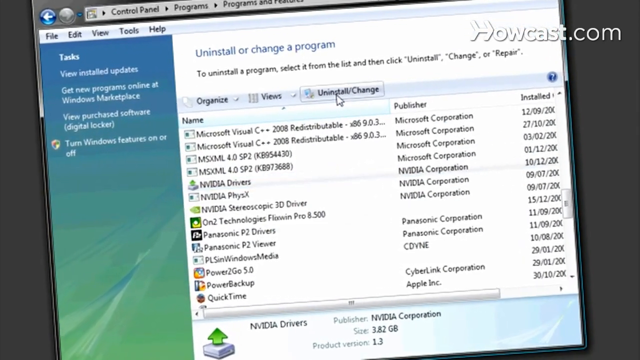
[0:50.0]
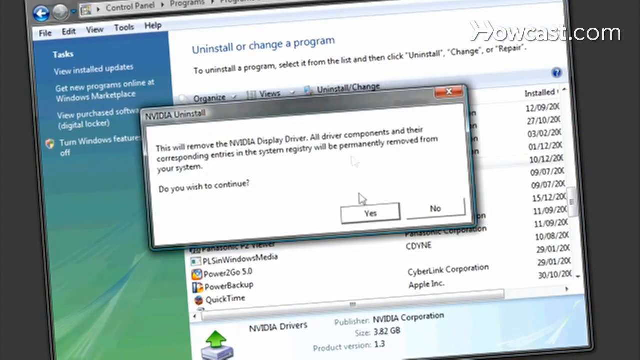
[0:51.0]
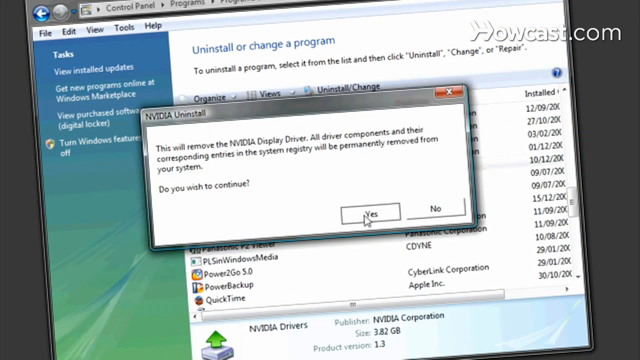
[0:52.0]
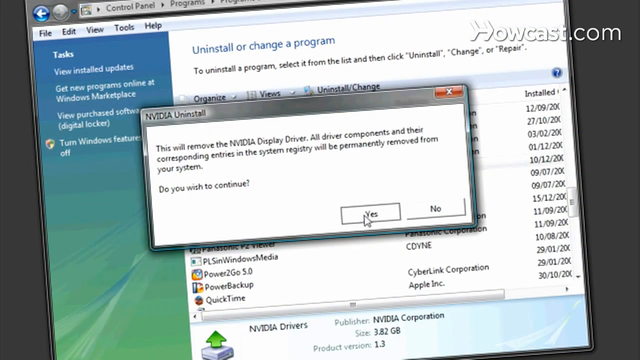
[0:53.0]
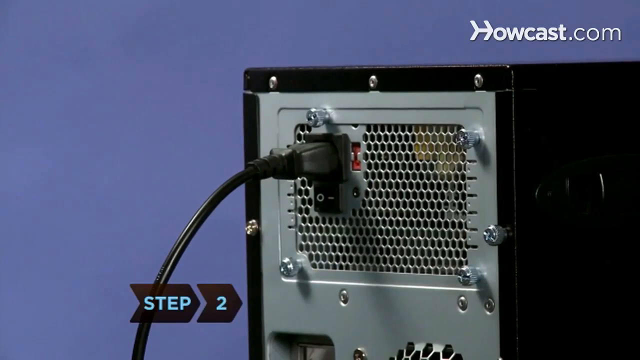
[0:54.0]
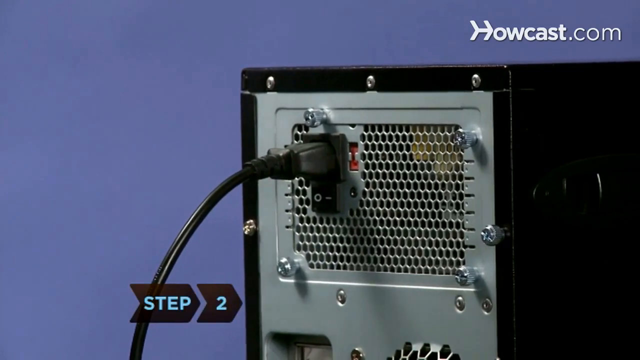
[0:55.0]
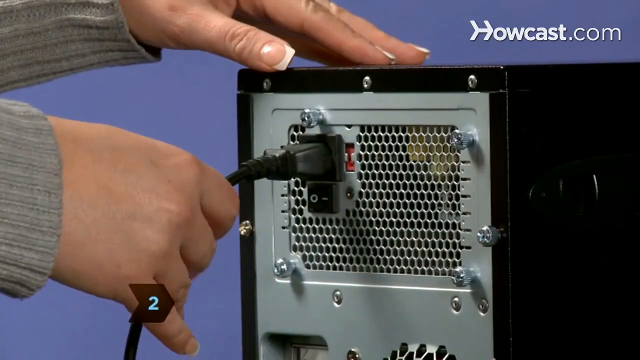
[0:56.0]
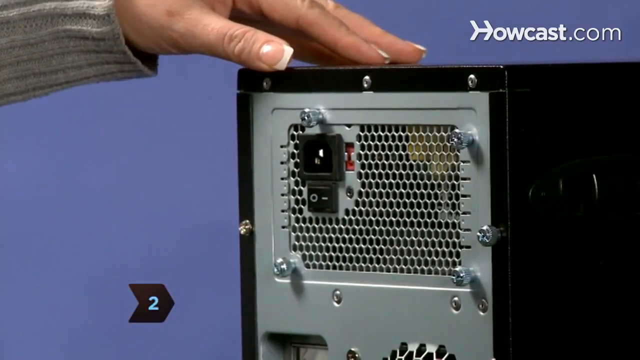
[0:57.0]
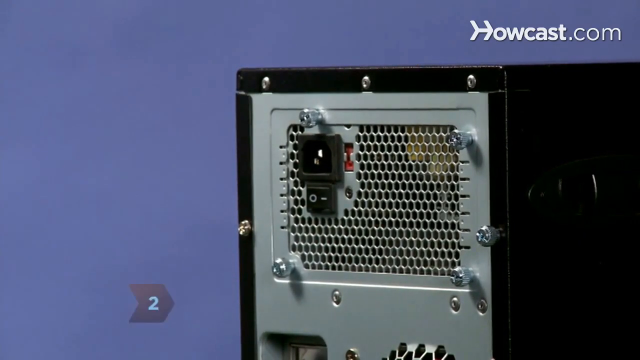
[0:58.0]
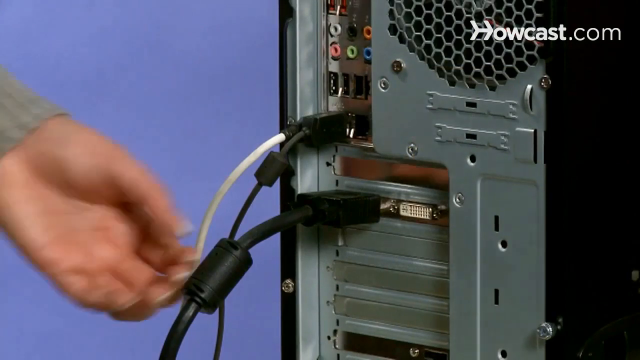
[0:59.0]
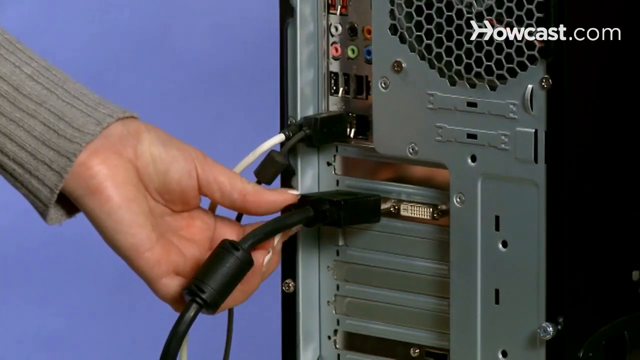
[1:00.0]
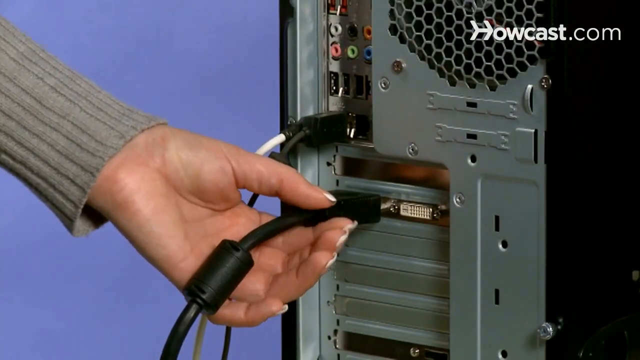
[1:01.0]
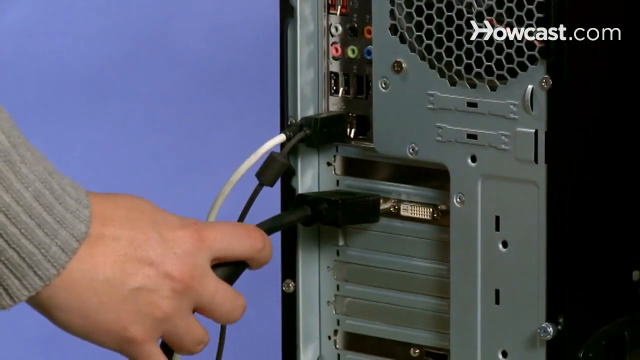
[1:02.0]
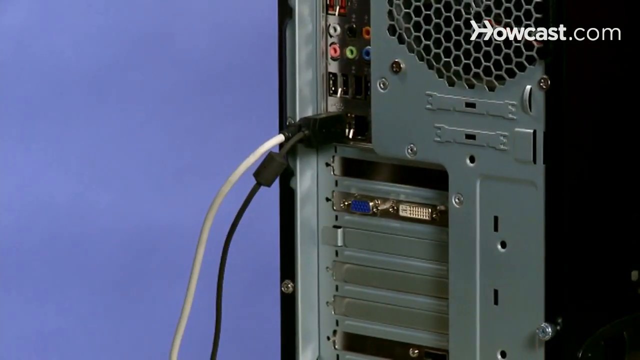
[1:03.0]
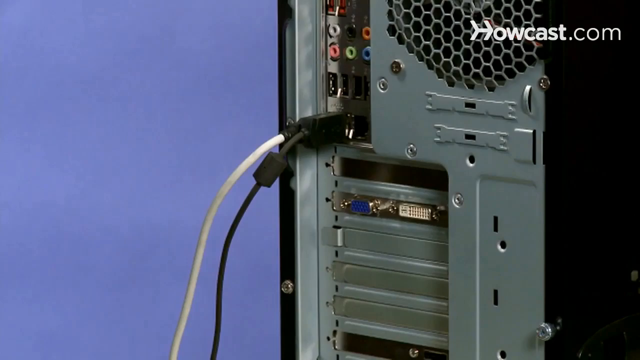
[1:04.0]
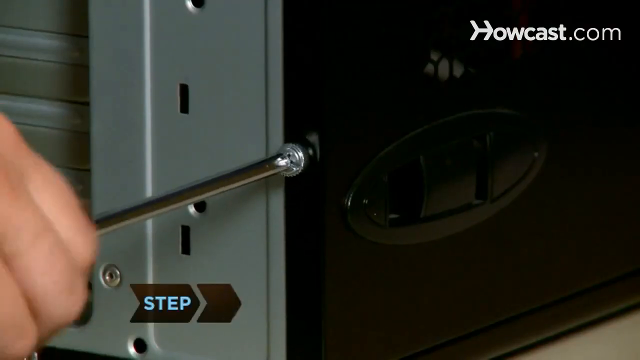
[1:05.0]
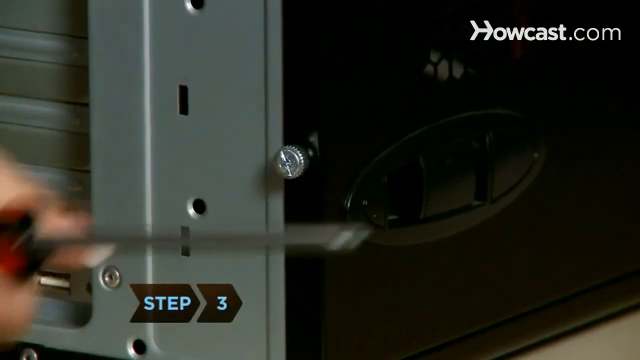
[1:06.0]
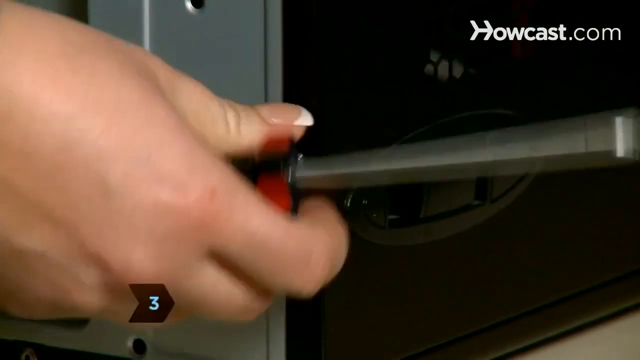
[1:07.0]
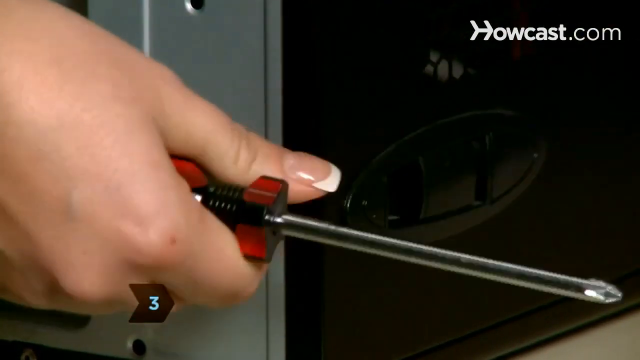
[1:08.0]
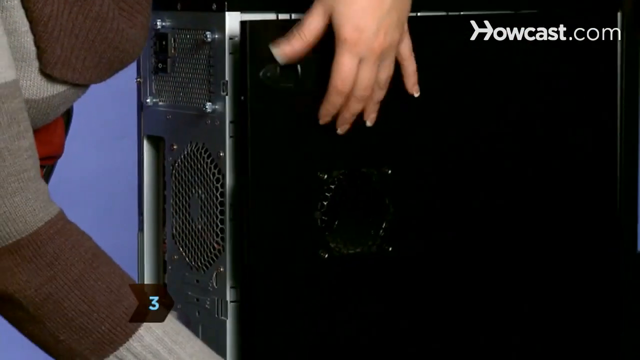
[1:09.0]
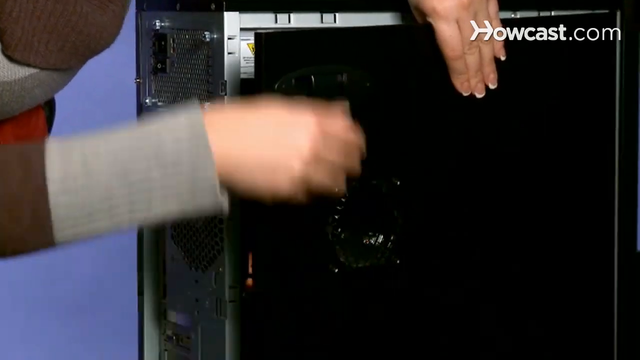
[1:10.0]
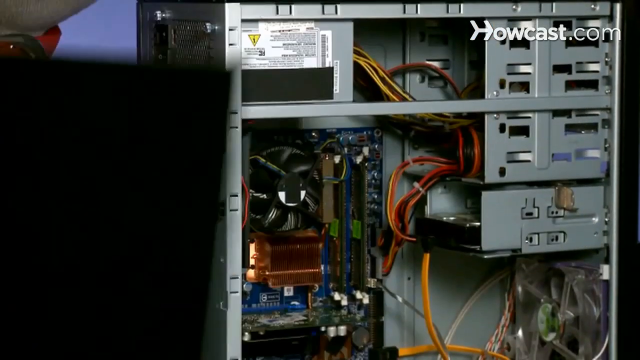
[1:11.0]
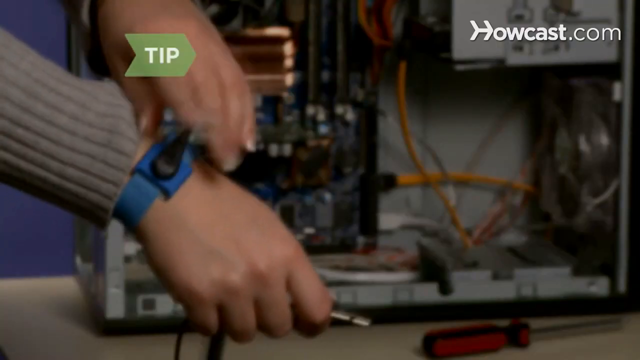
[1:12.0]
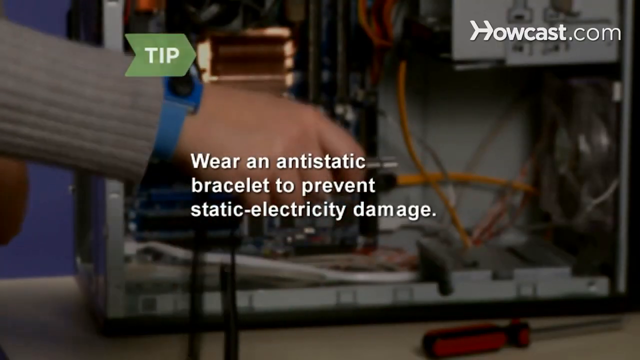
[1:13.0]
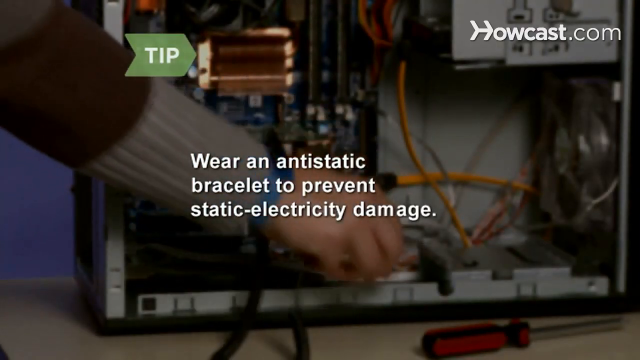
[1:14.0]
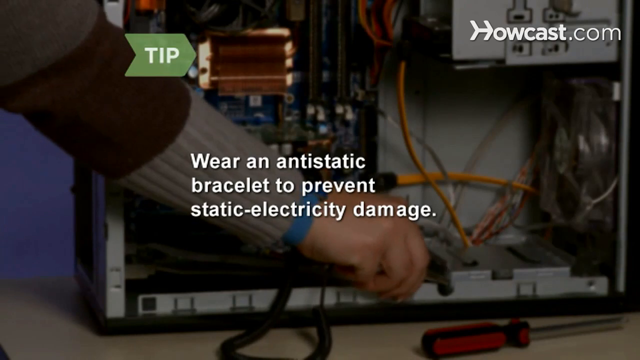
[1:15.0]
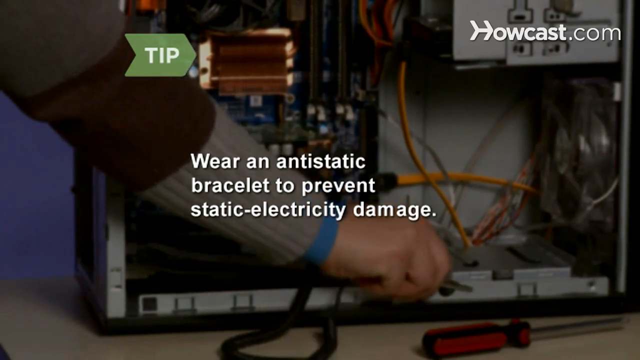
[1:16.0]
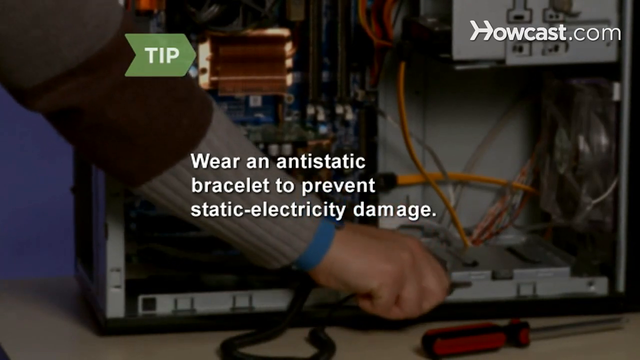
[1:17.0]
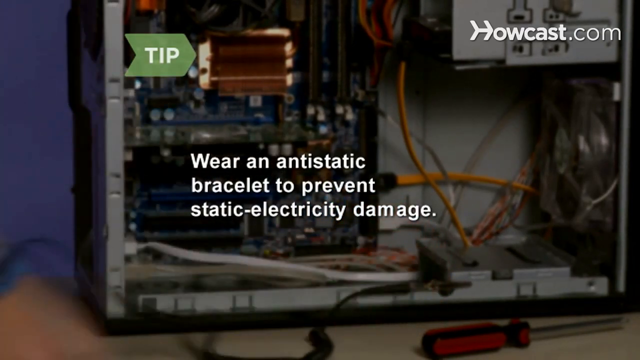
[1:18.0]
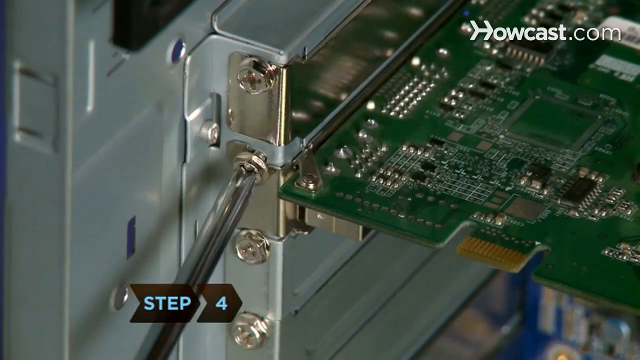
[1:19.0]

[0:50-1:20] A system unit is shown, and a person who seems to be an IT technician, apparently a woman, tries to open it. The power supply is unplugged, along with a VGA cable, and the unit is unscrewed and opened. The name Lifewire apparently appears.